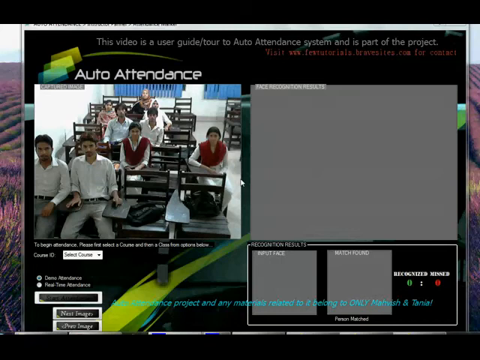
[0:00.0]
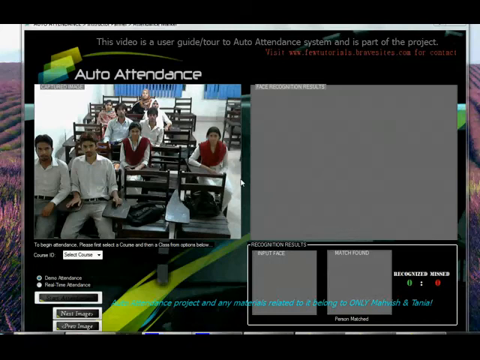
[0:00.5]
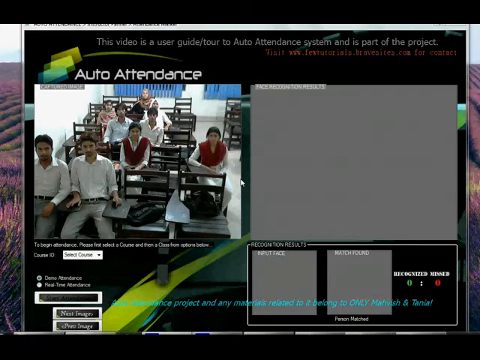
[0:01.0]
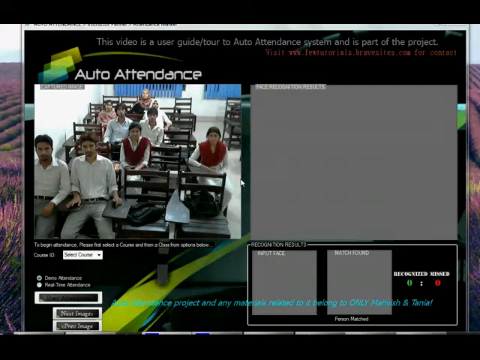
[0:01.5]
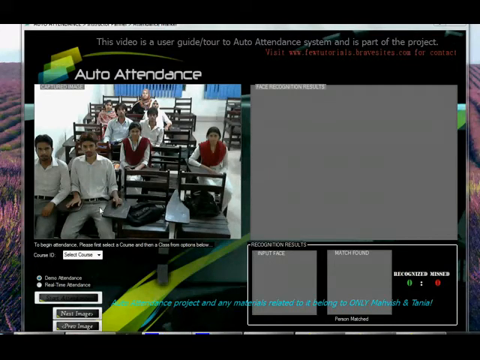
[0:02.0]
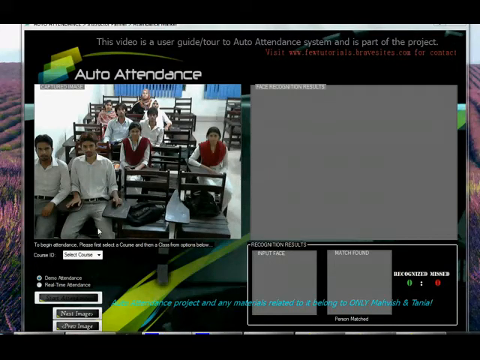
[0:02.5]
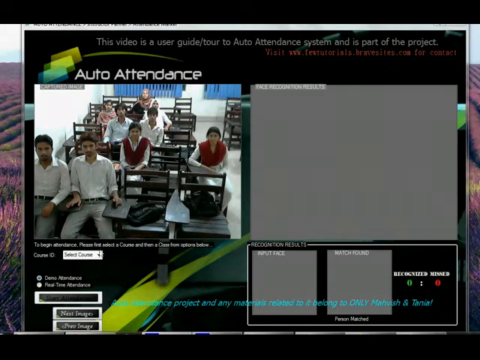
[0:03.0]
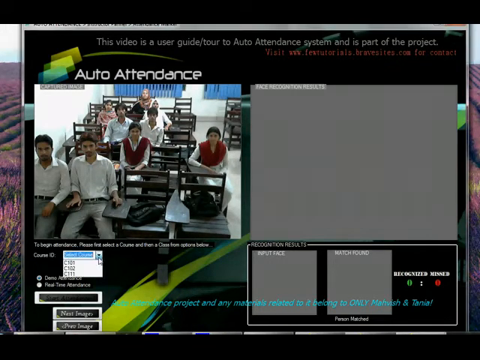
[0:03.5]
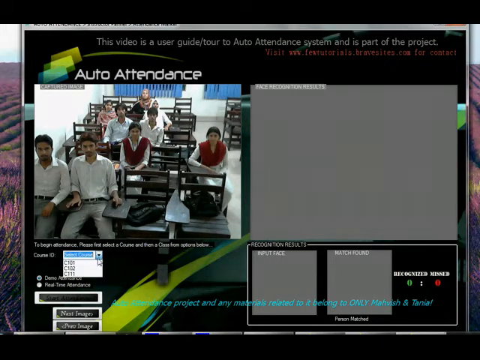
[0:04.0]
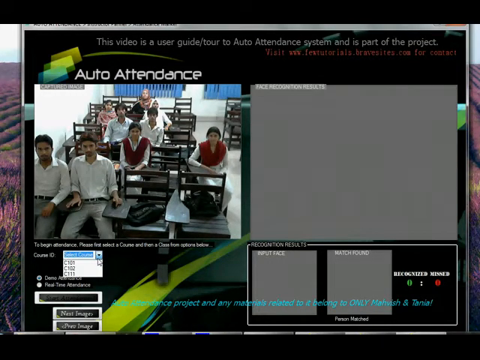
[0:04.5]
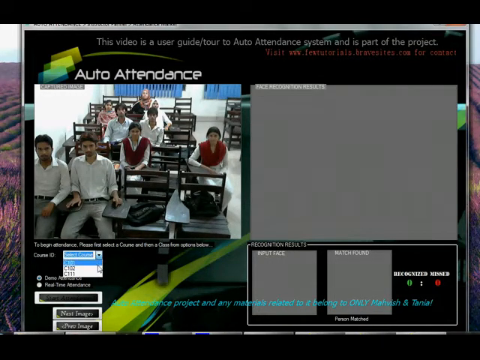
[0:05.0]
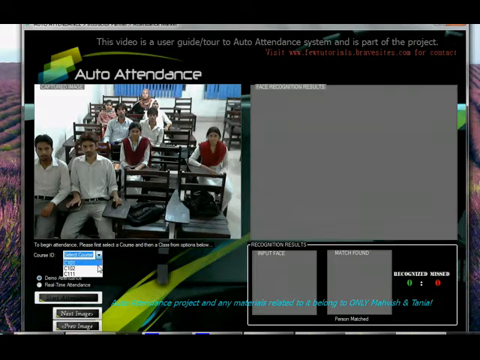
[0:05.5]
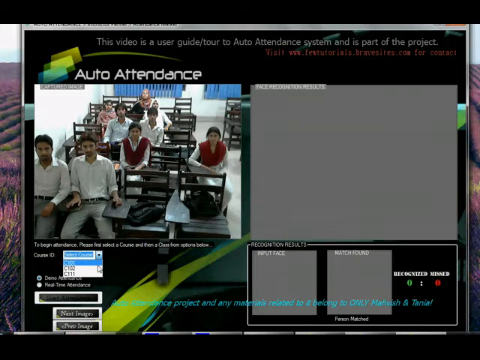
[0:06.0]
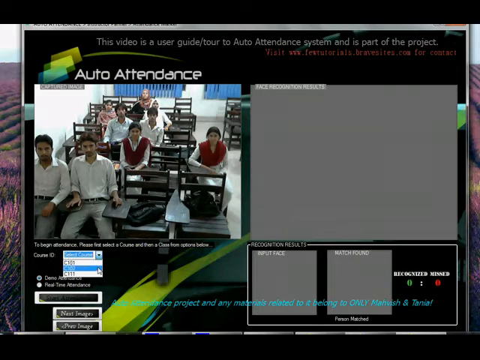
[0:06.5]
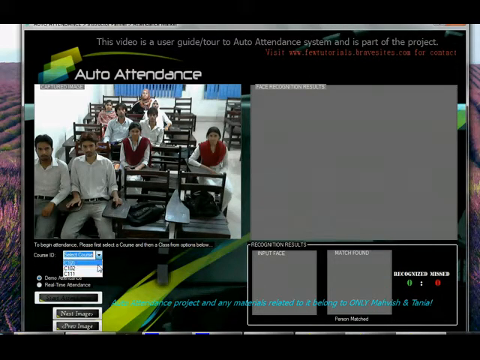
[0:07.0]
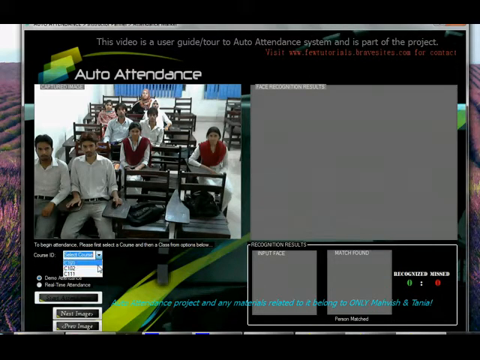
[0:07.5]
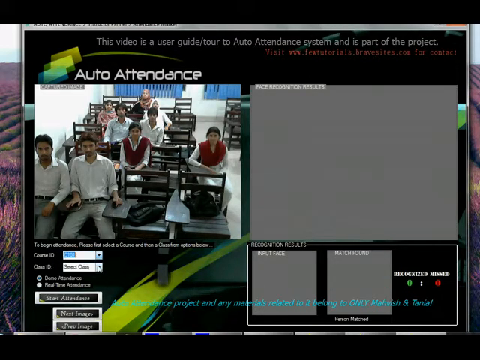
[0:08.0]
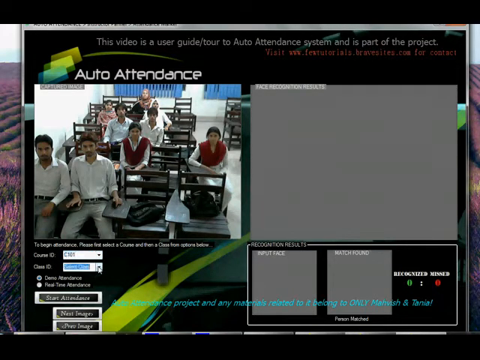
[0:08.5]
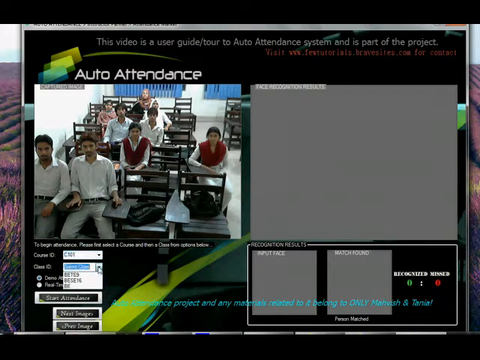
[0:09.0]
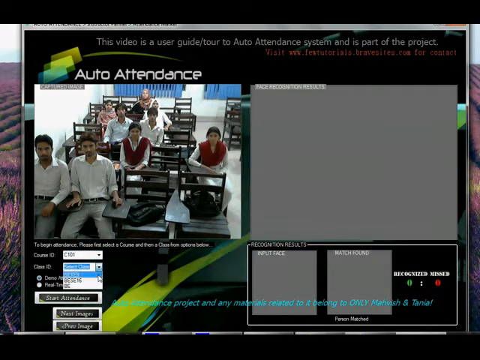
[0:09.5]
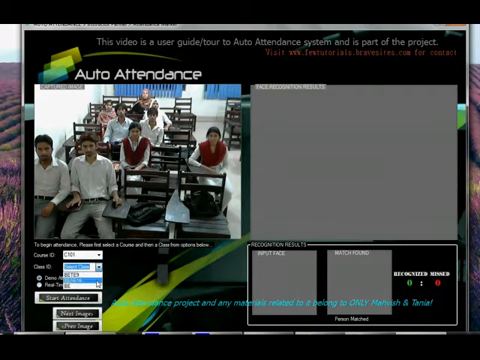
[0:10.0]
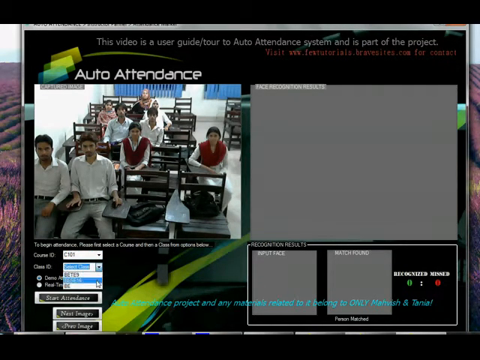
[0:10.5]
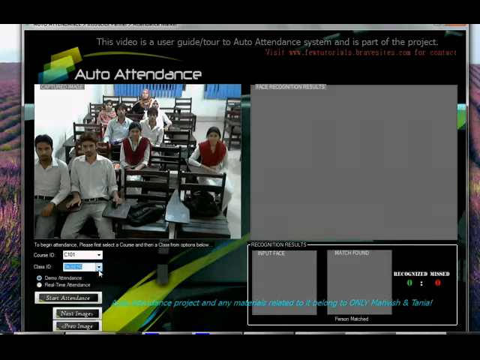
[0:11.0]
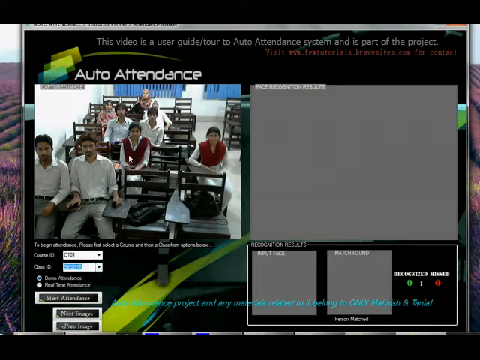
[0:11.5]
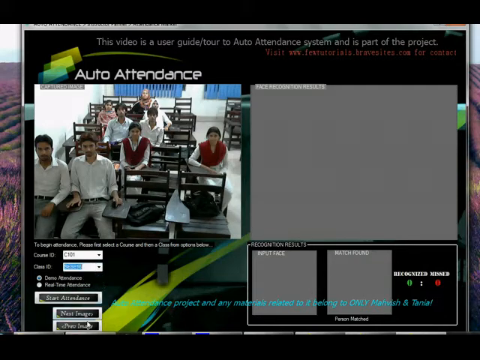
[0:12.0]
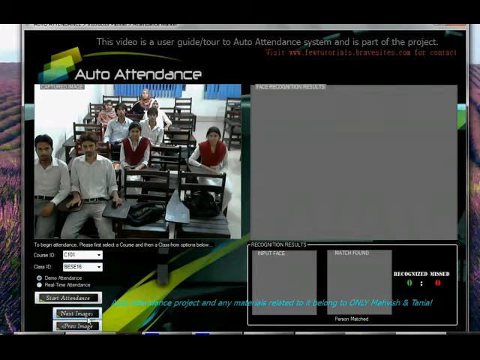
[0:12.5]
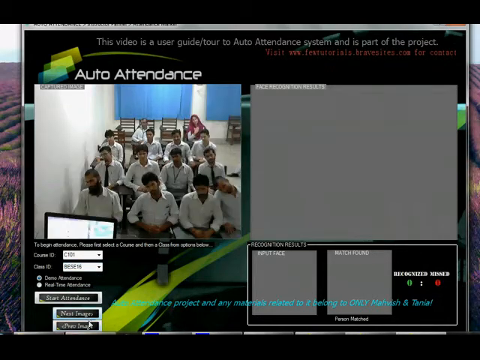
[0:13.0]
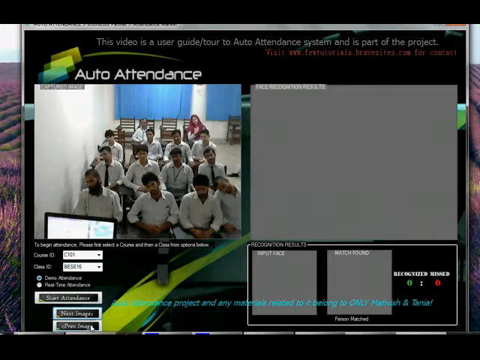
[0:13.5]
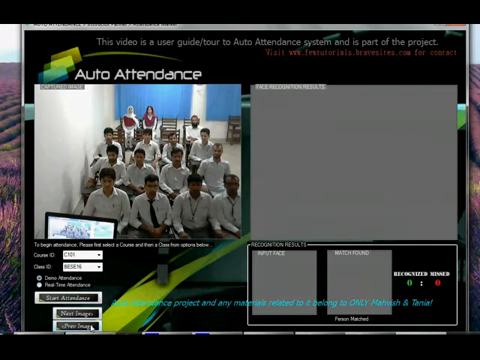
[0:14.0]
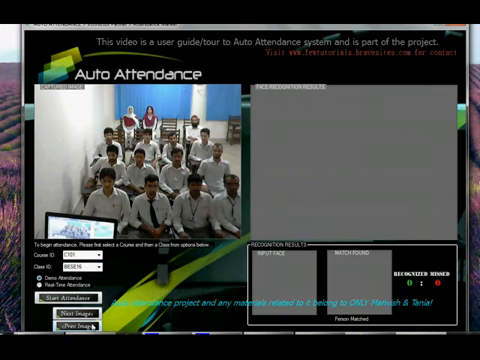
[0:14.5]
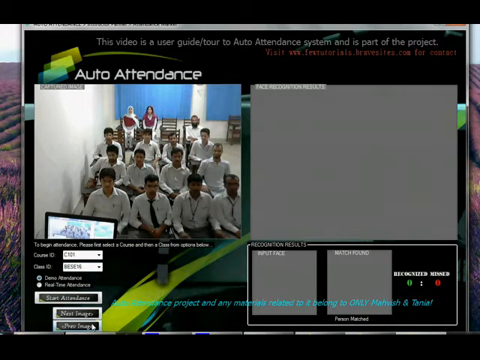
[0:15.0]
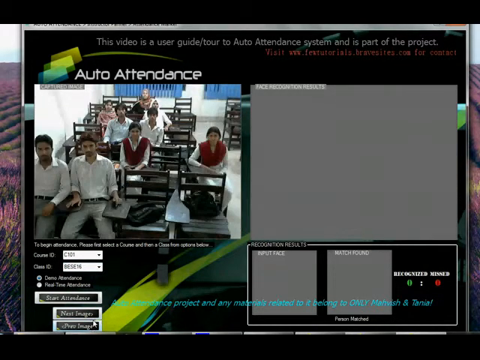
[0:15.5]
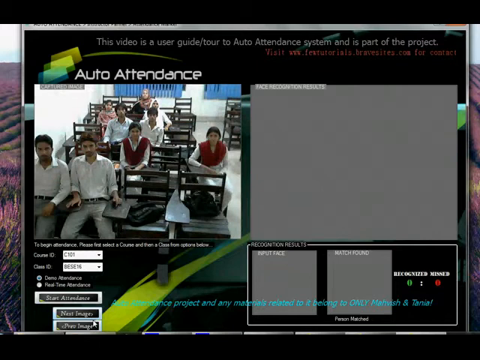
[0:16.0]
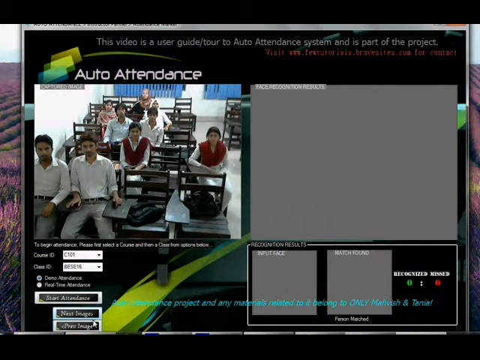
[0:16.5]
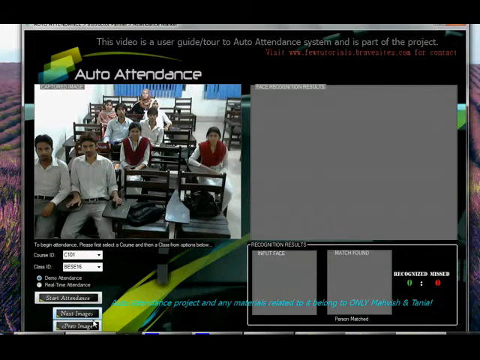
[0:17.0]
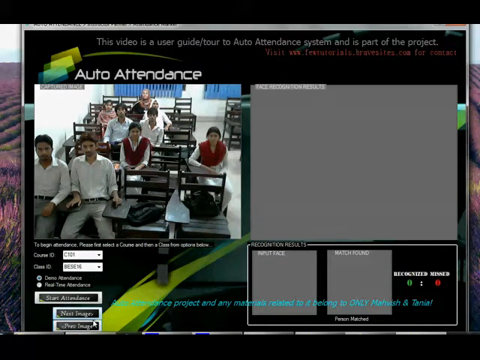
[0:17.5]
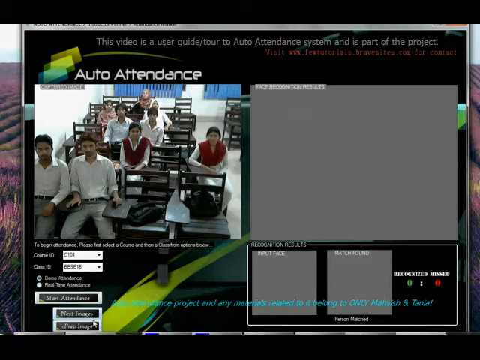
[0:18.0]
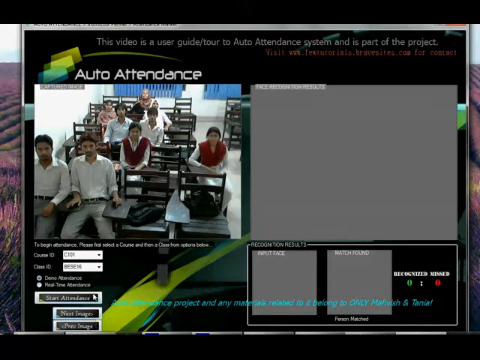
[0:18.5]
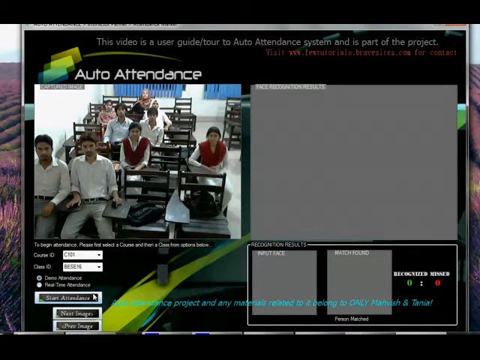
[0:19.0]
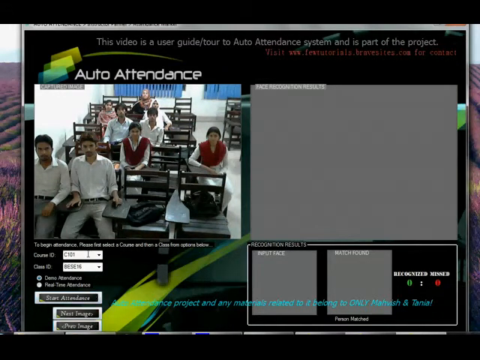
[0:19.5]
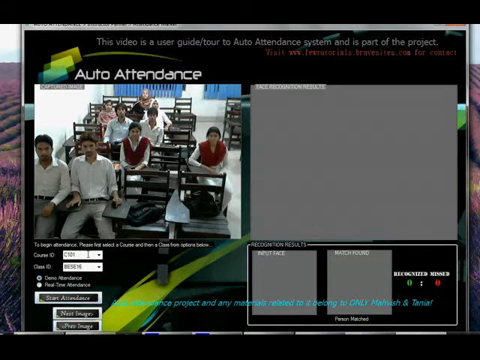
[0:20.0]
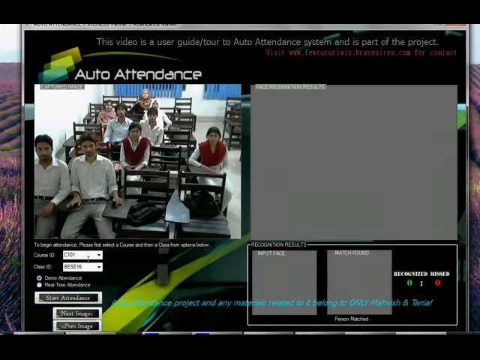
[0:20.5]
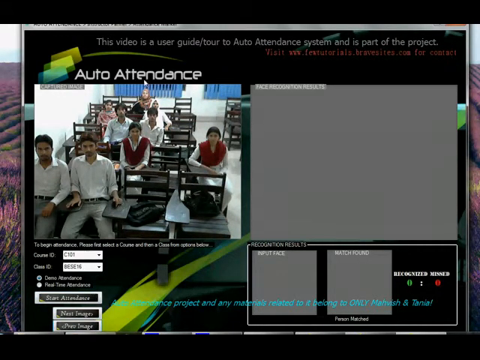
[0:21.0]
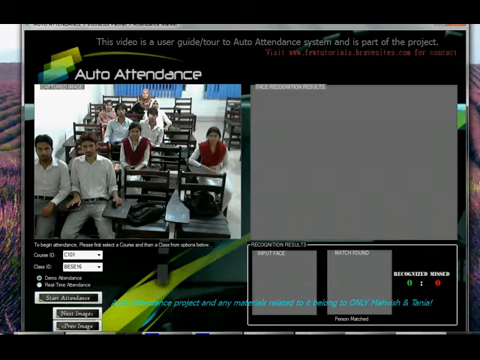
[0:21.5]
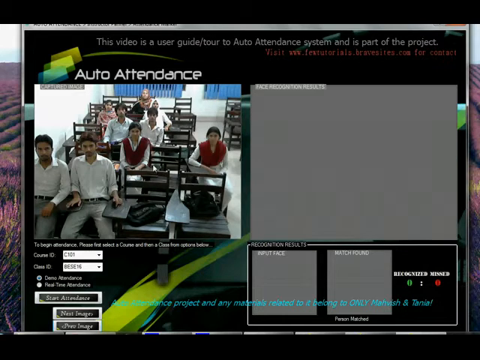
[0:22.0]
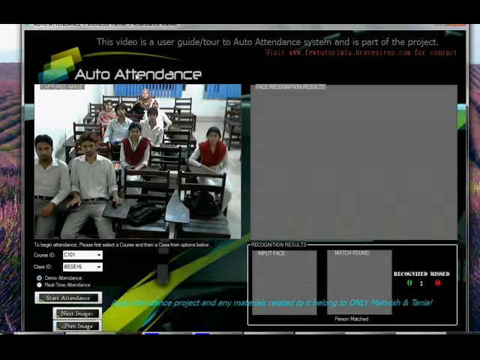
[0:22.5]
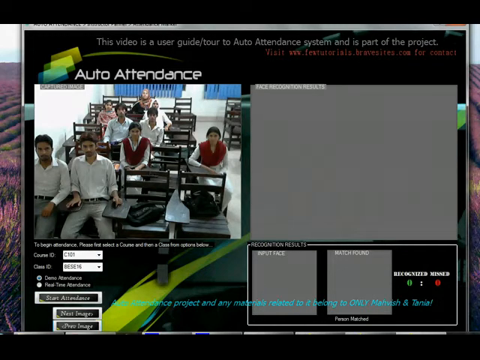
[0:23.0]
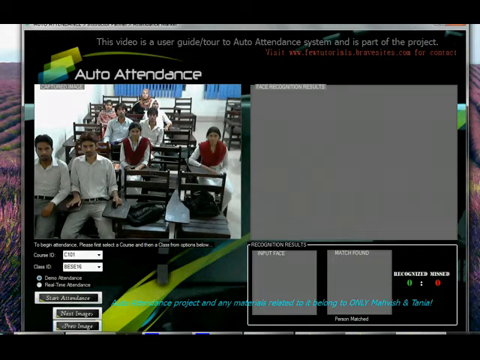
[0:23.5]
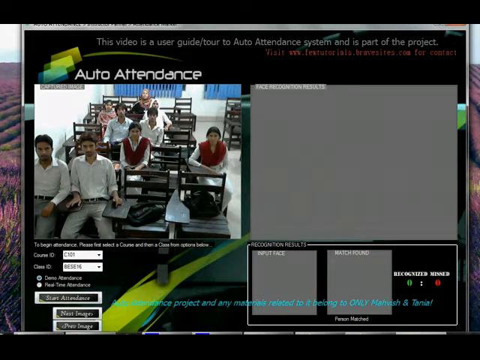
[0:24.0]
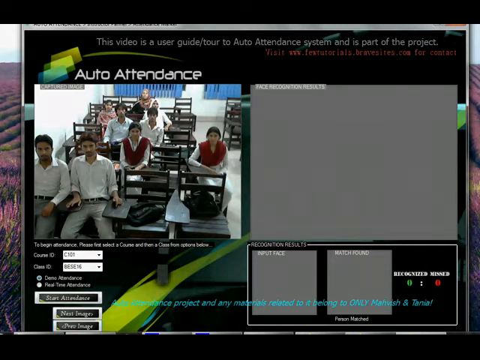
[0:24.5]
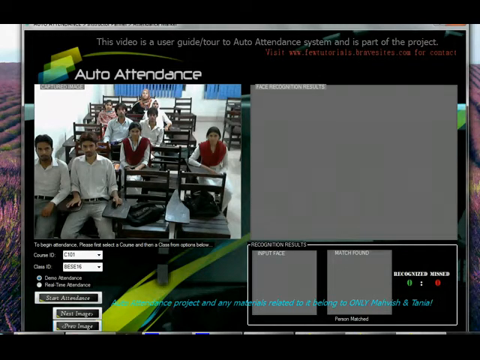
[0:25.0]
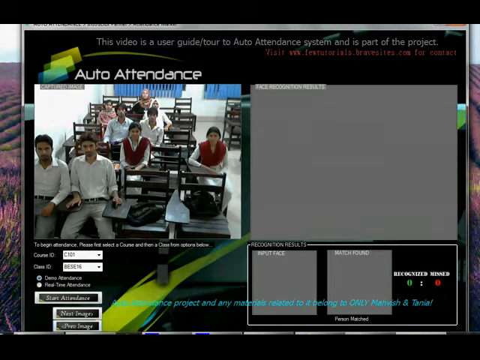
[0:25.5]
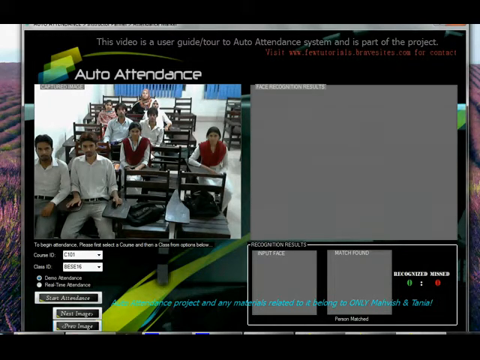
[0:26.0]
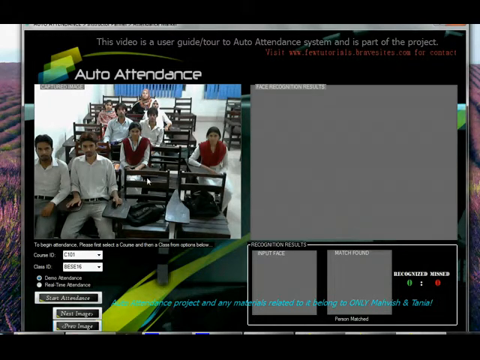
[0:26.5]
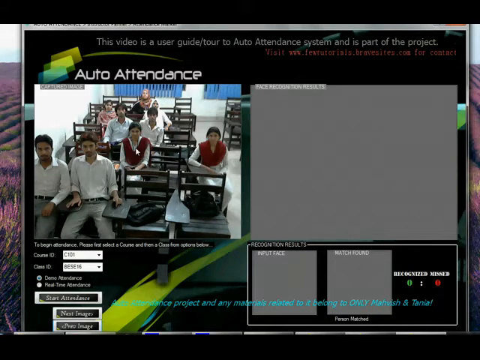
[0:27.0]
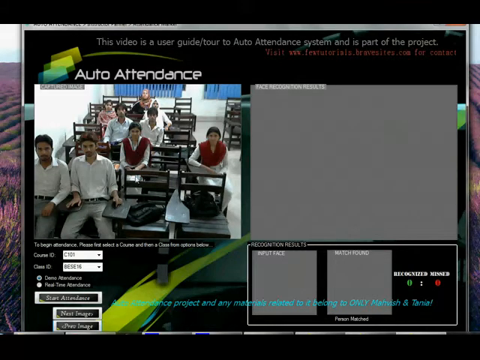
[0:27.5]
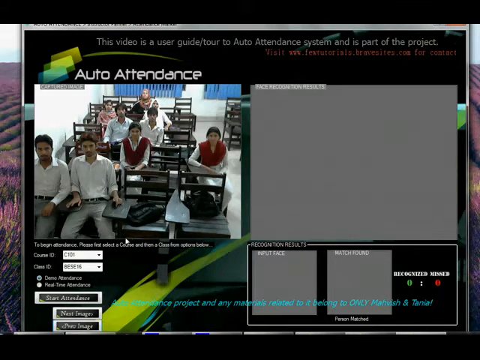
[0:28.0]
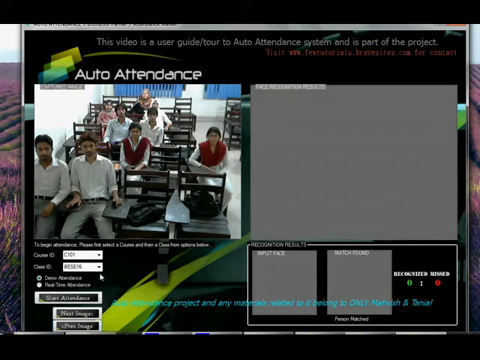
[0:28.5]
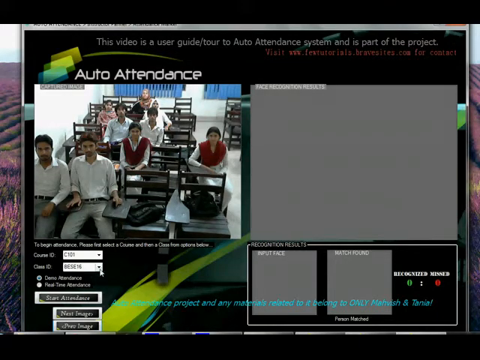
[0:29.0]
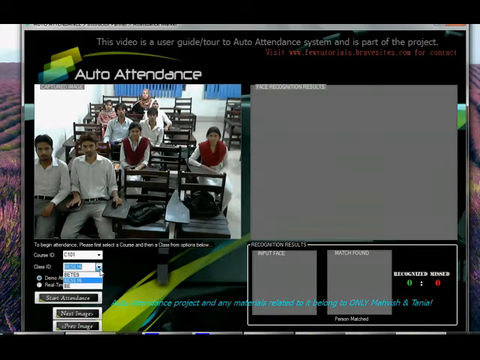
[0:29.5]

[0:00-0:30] Text on screen reads "auto attendance"; the video appears to be a user guide to an auto attendance system as part of a project. There are several screens with lots of different boxes, and the screen looks cluttered. Text reads "recognition results" and "match found" and "input face." It may be something that monitors attendance for some kind of program. In what looks like the background there is a field of yellow or purple flowers of some kind. A man changes parameters in several different places near the top by moving his mouse around, and it looks like he is changing something involving guys in chairs. Since the text says "attendance," it looks like some kind of software monitoring attendance.